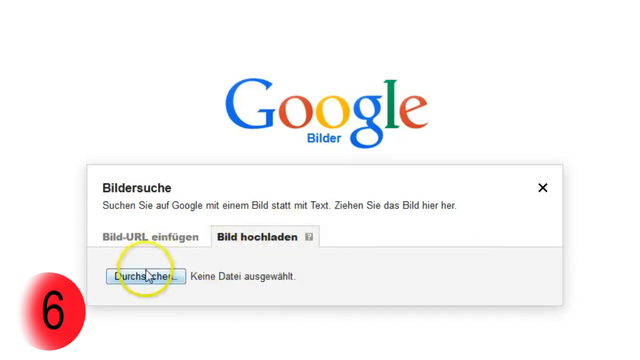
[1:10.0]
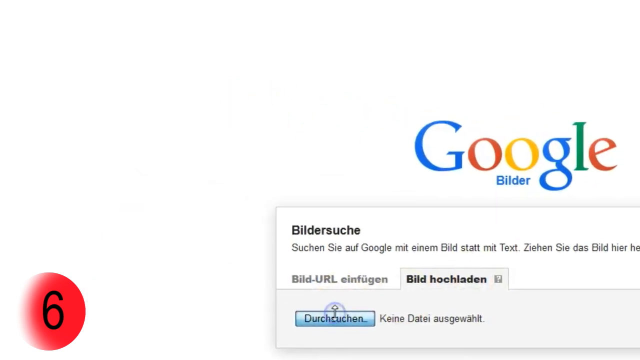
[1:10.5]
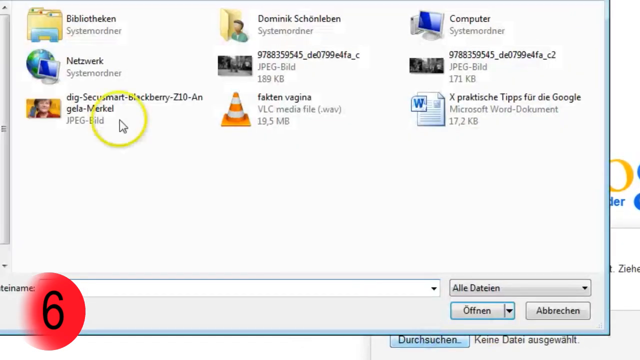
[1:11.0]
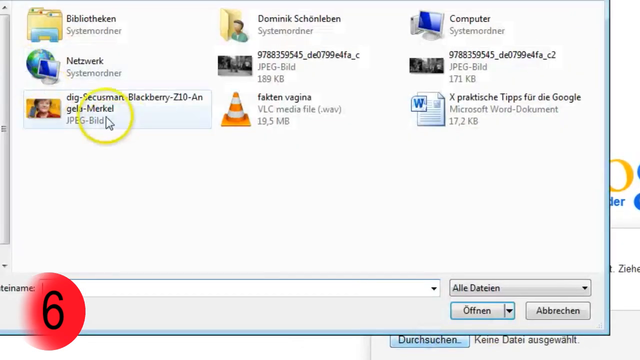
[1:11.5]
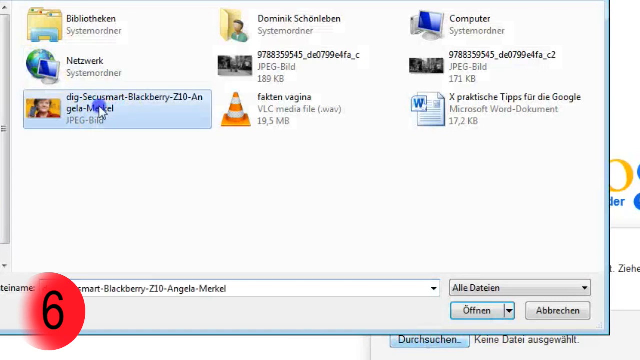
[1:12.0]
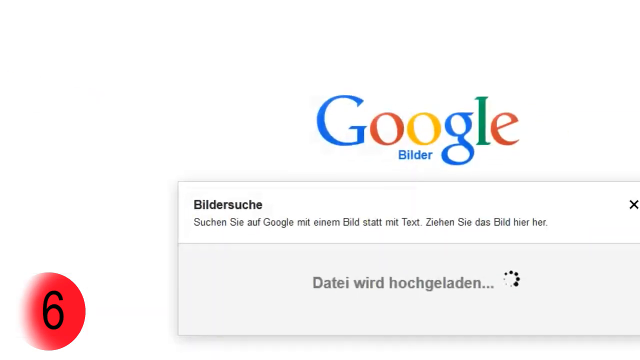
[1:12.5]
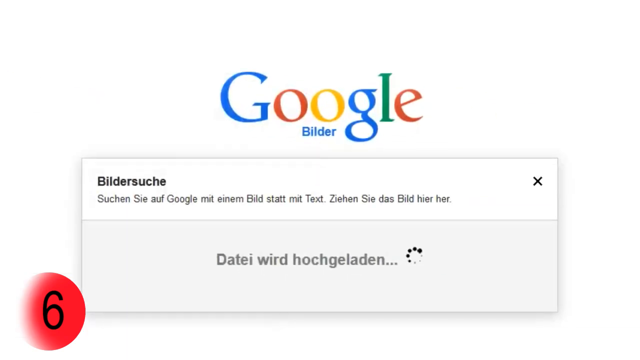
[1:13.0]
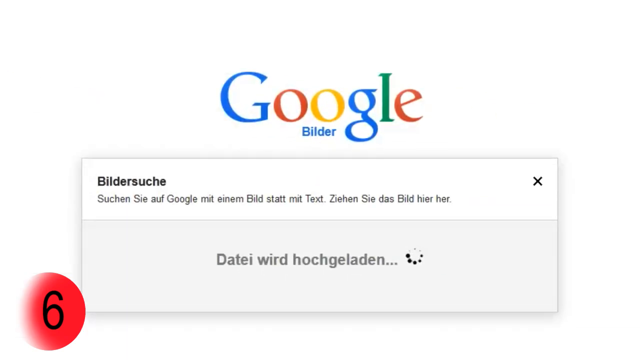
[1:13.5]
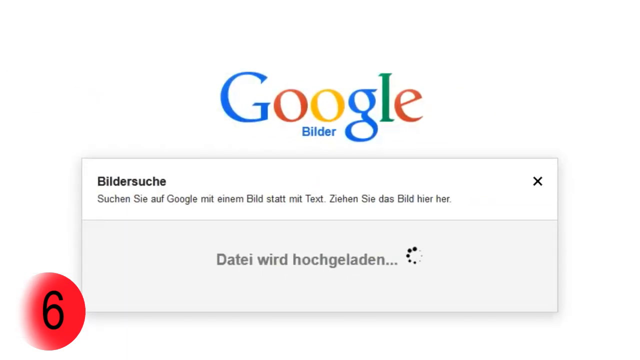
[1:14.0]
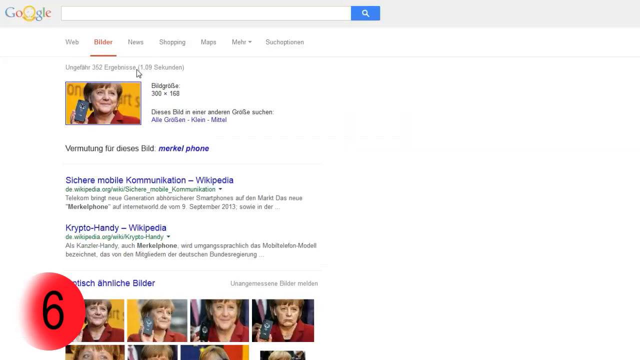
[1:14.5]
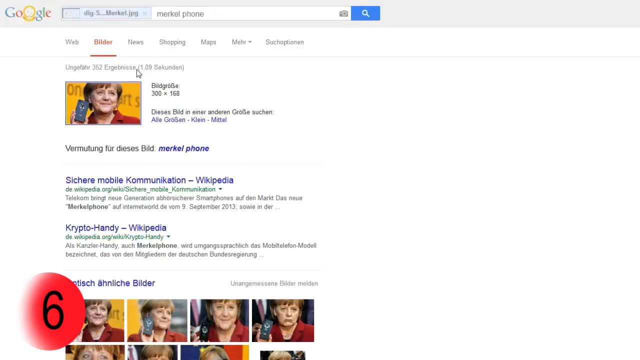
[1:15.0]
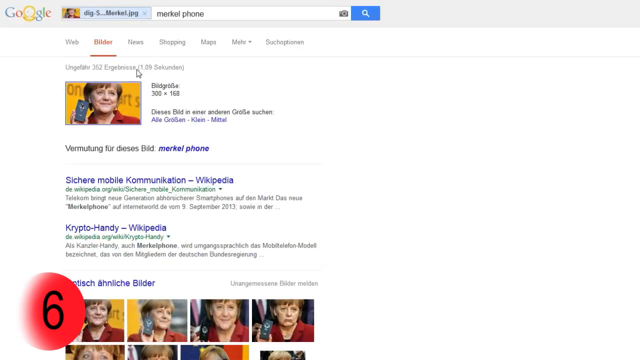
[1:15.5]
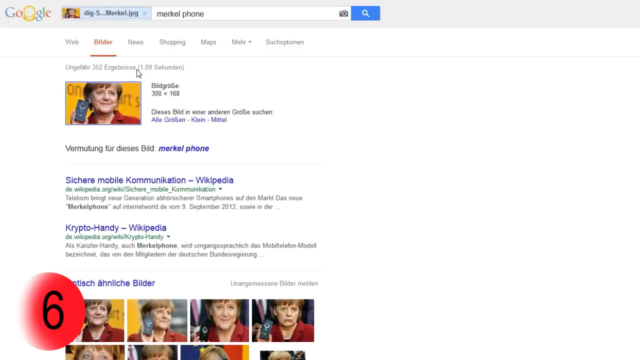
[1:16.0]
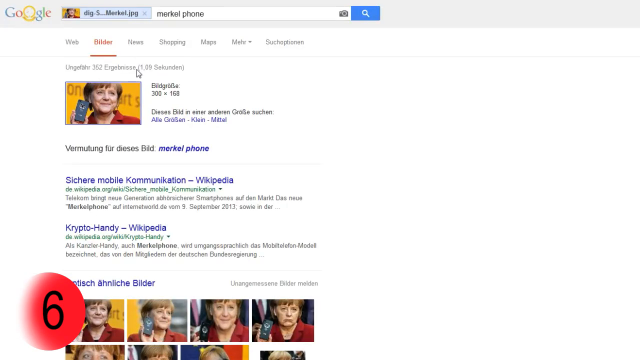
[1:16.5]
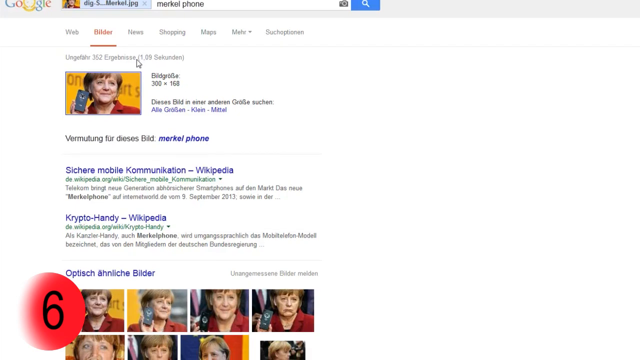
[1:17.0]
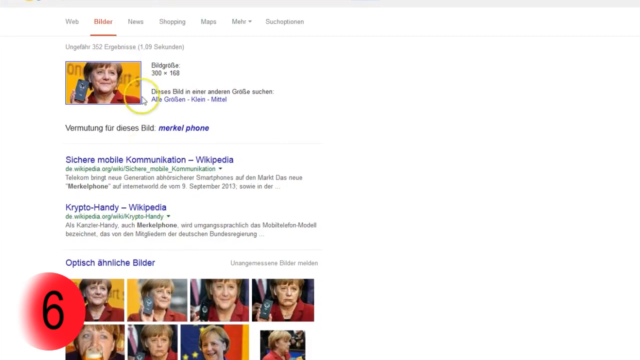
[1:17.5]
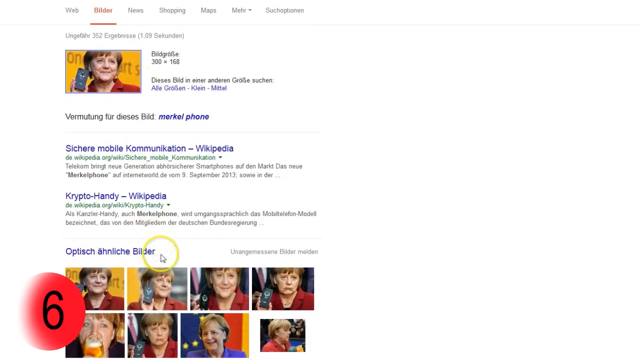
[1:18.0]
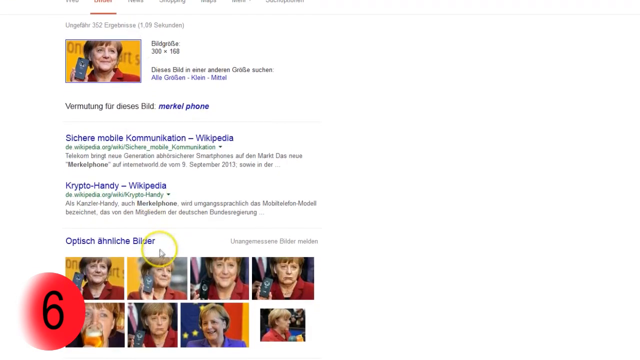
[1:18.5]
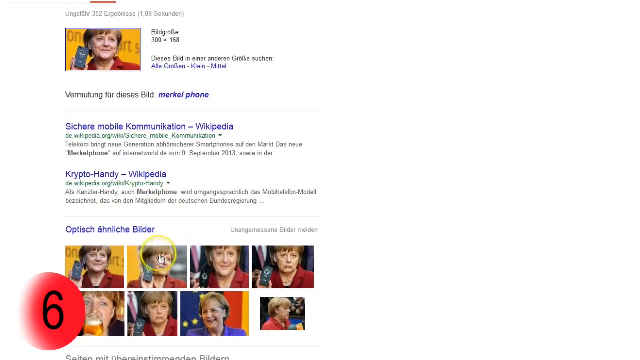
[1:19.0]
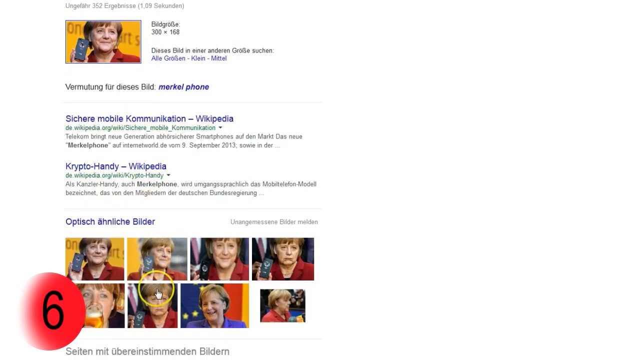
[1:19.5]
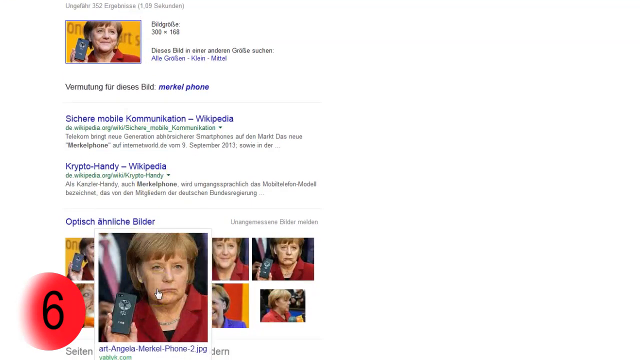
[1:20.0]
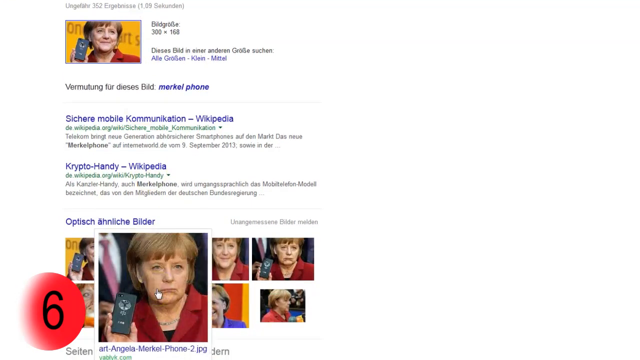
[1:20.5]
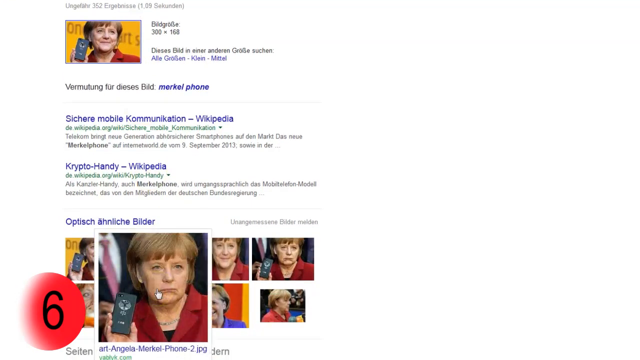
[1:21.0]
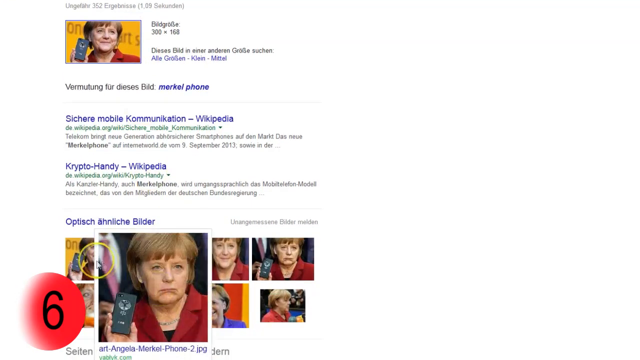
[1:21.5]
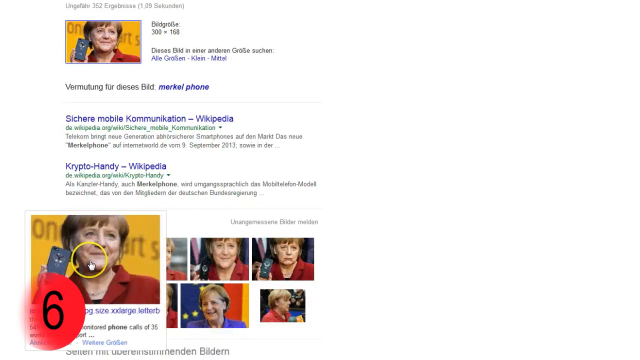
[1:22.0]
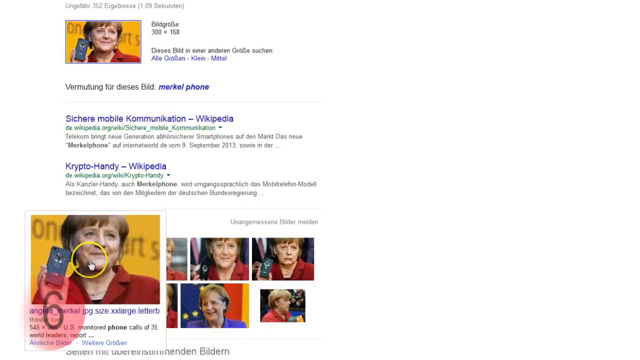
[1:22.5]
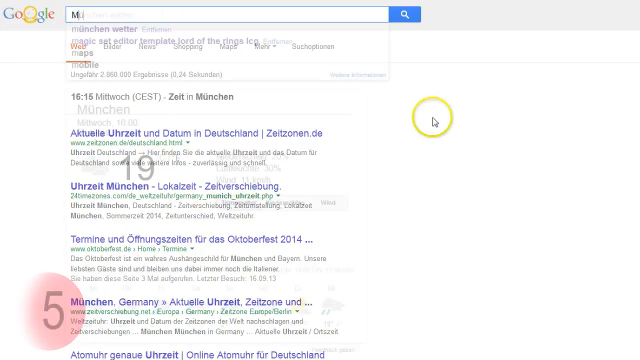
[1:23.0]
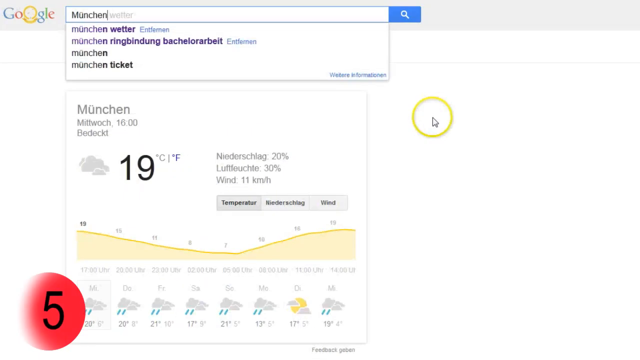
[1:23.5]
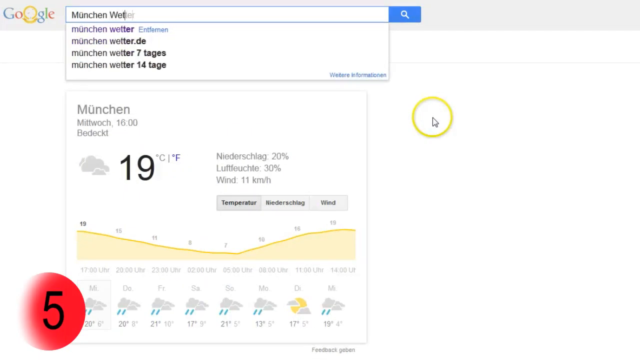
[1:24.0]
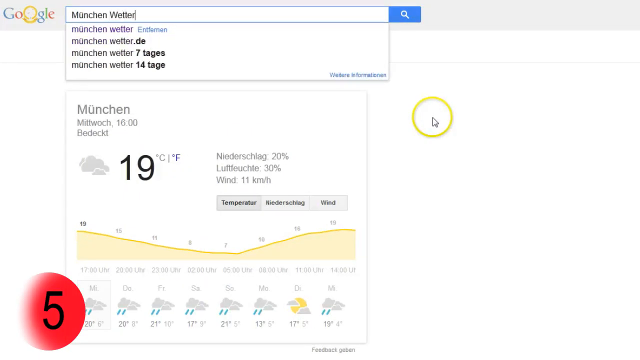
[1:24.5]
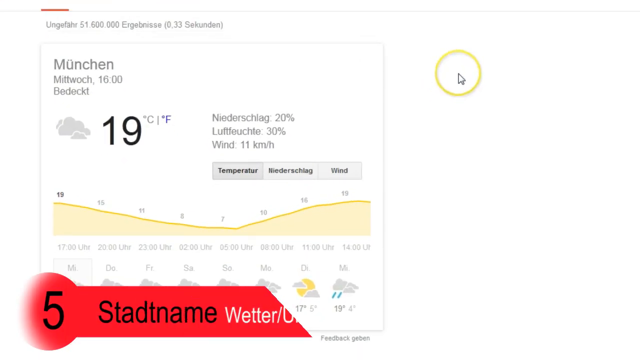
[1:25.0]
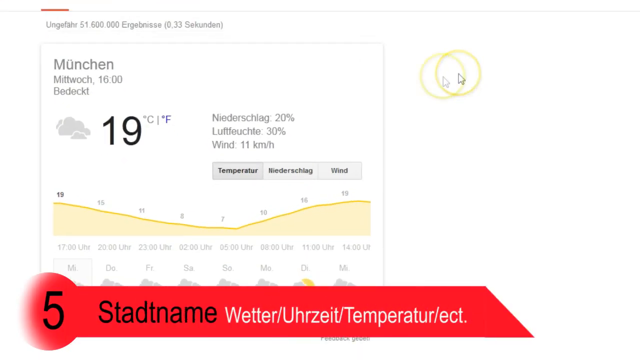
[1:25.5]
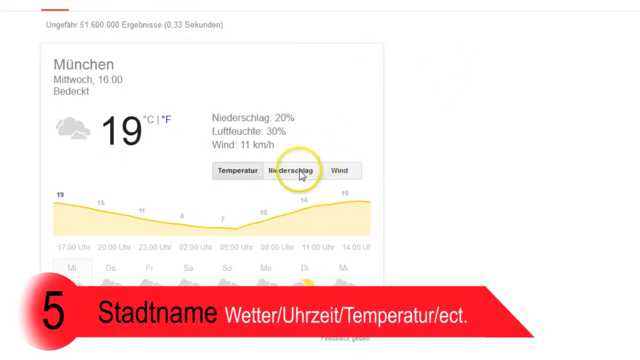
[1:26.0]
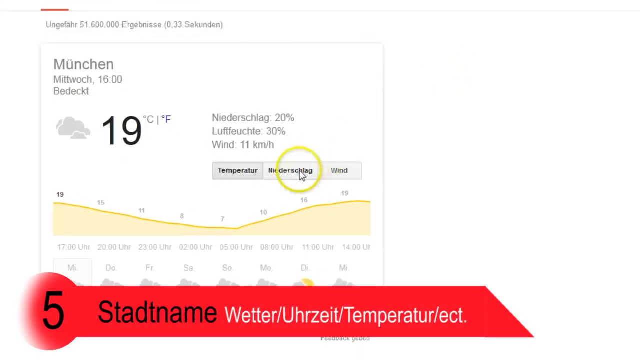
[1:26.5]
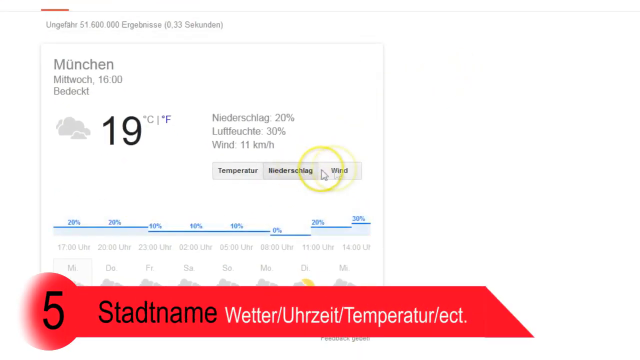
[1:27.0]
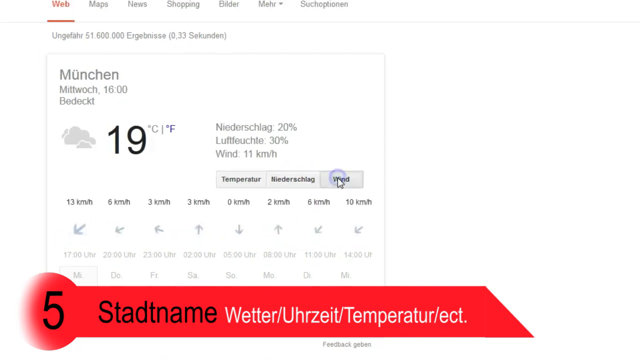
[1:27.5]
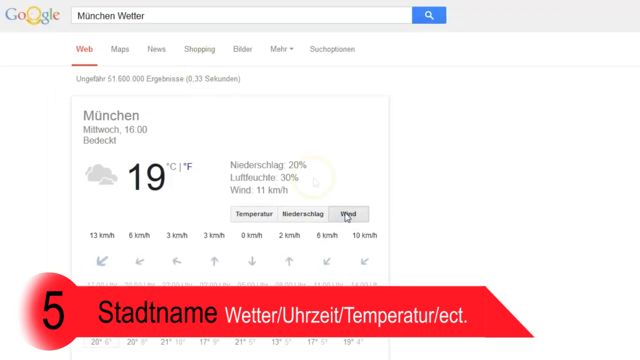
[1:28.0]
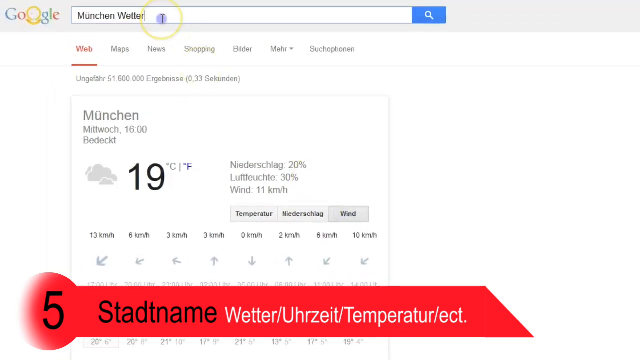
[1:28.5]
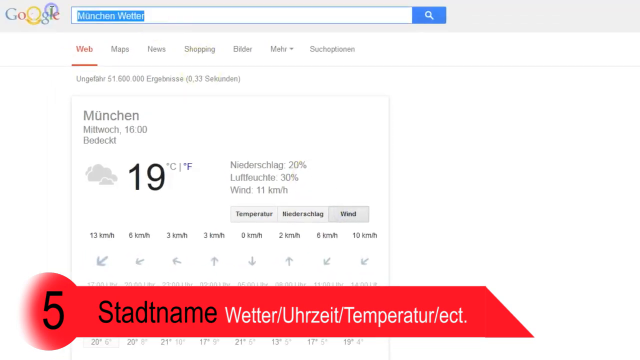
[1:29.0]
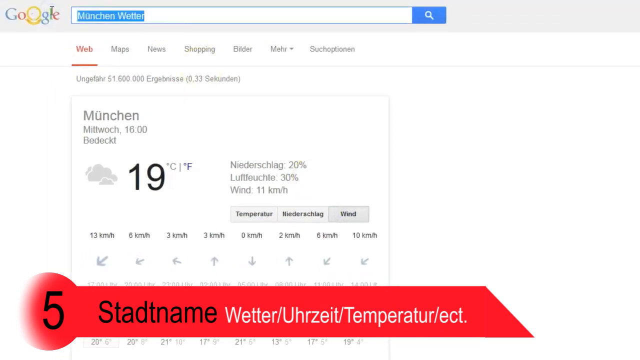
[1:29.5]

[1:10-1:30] On the Google homepage, a pop-up opens and the person recording selects an image and inputs it into the search. The image shows an older woman wearing a red shirt and holding up a phone. After pressing enter, the Google page shows multiple results for the image, with the search bar containing the image along with the words "Merkle Phone". There are multiple different website results too. The person very slowly scrolls down and hovers over some of the image results. They then open another tab and type in words in German, searching the temperature. At the bottom of the screen, the number 5 appears on a red banner with more words in German, along with the temperature. They press a button in the temperature results, such as the wind, and then highlight the search and delete it.